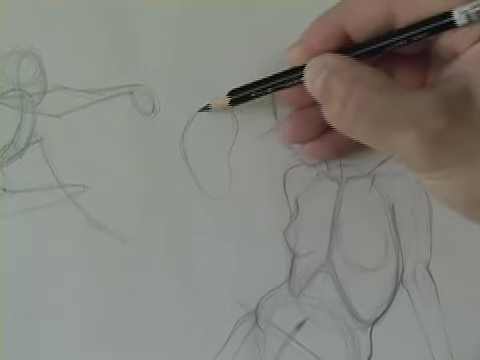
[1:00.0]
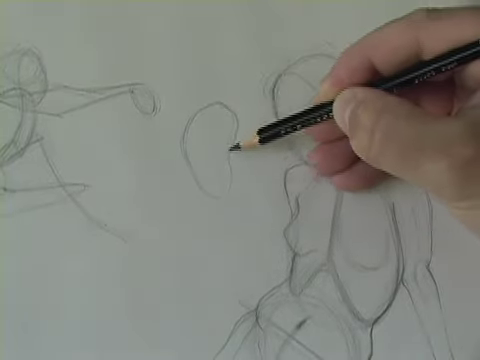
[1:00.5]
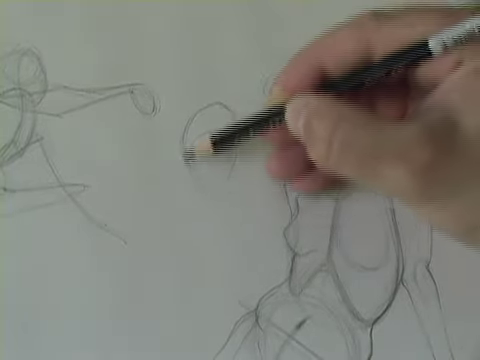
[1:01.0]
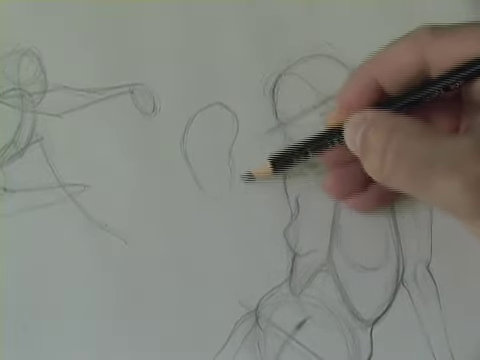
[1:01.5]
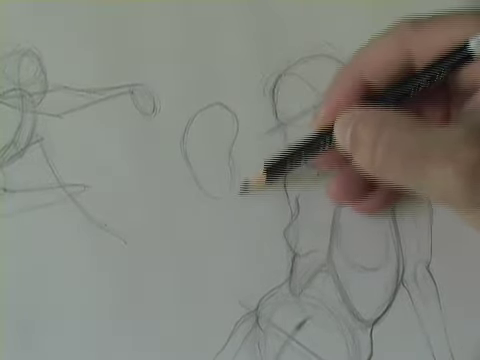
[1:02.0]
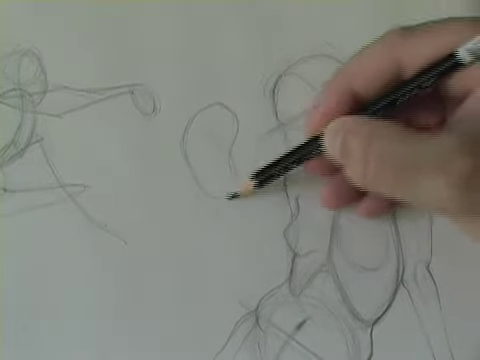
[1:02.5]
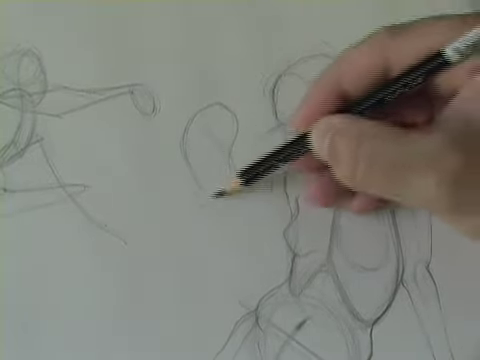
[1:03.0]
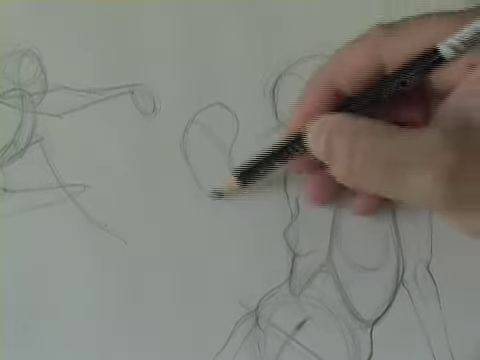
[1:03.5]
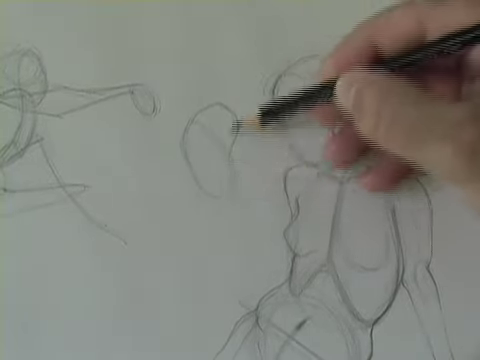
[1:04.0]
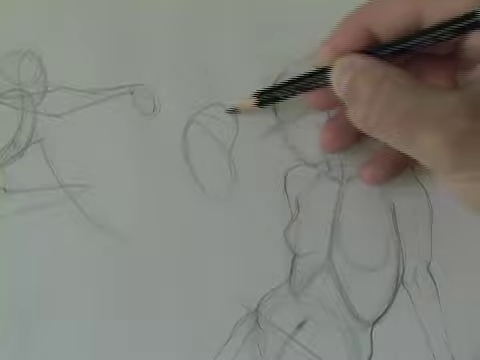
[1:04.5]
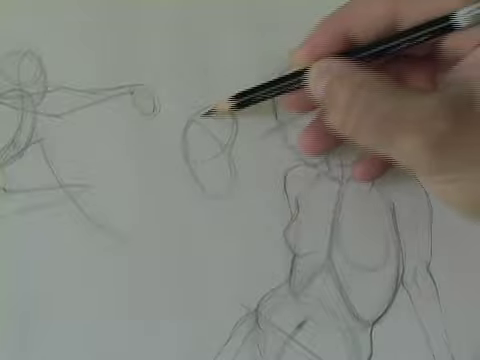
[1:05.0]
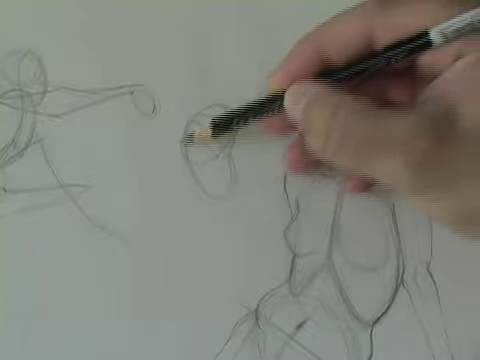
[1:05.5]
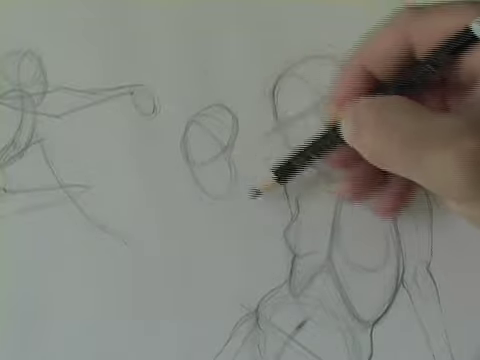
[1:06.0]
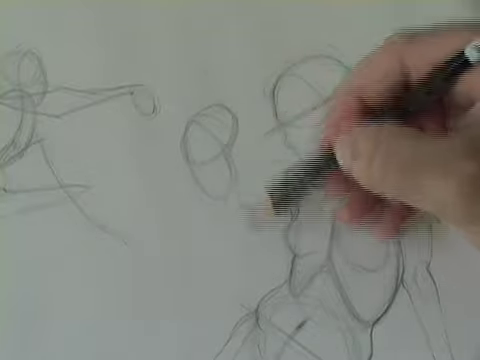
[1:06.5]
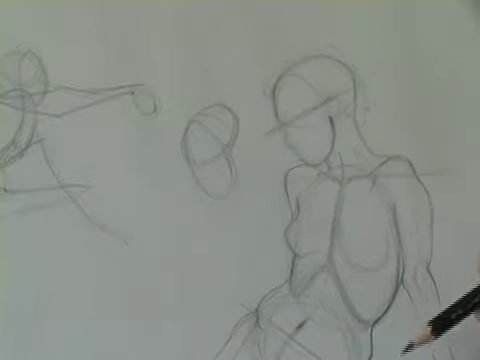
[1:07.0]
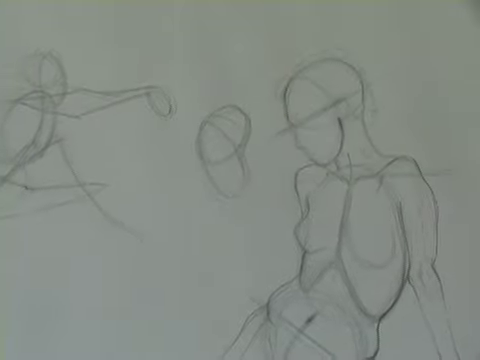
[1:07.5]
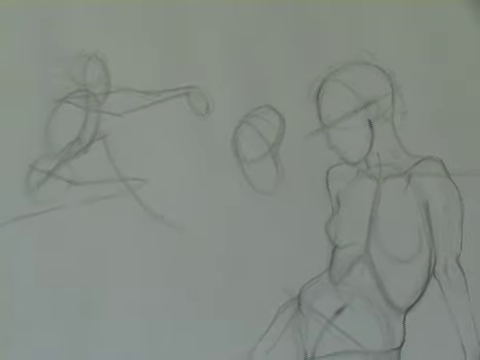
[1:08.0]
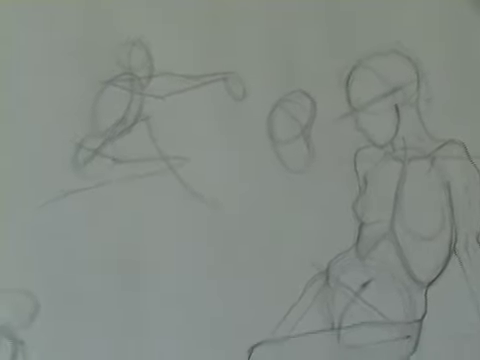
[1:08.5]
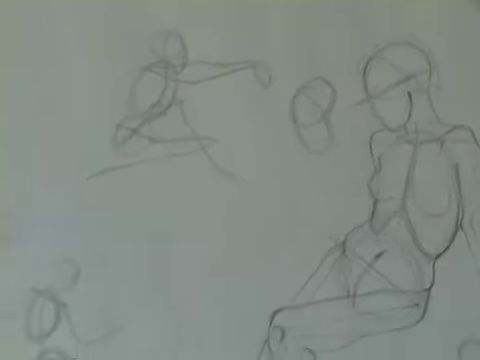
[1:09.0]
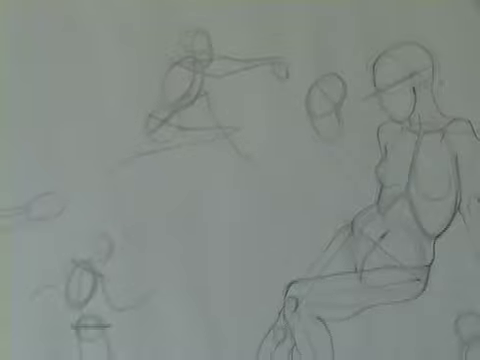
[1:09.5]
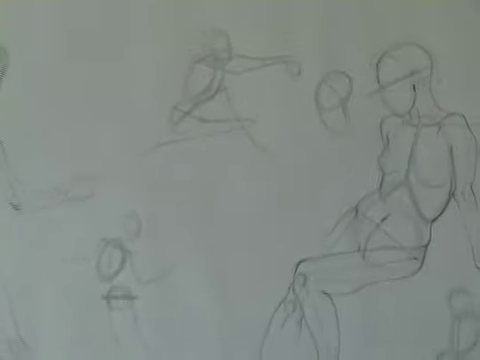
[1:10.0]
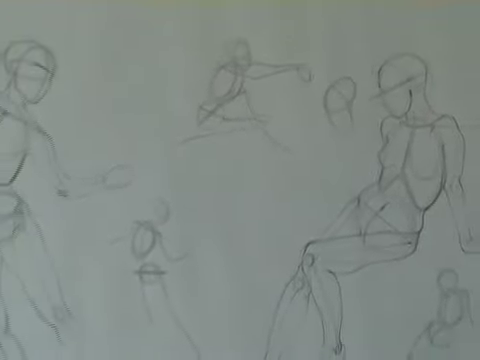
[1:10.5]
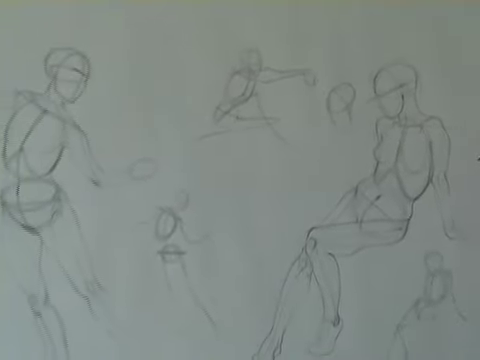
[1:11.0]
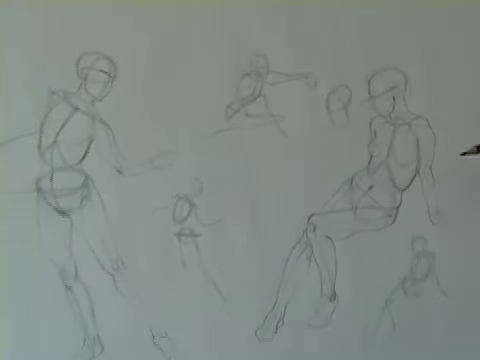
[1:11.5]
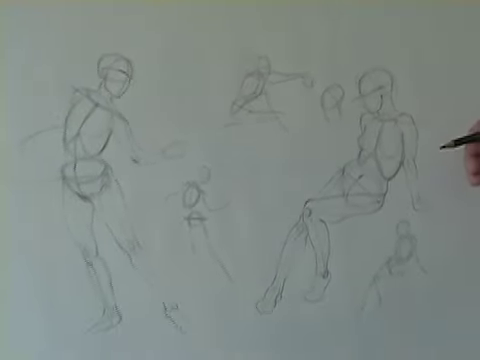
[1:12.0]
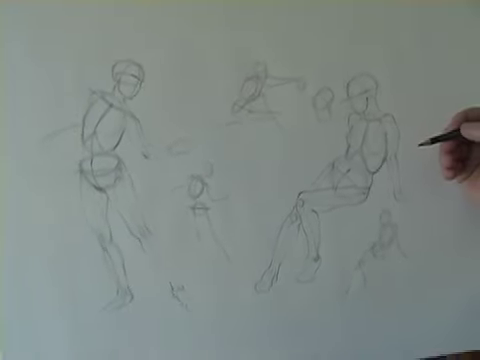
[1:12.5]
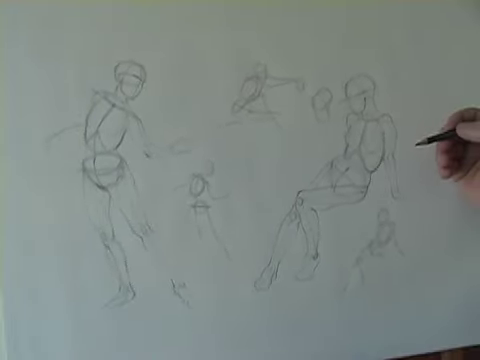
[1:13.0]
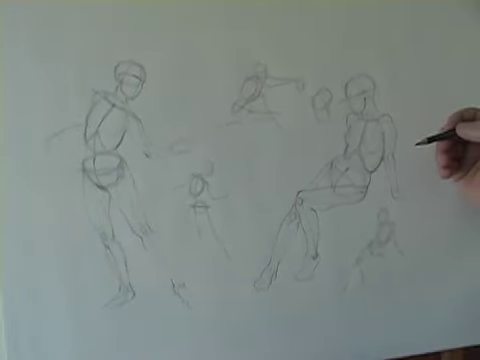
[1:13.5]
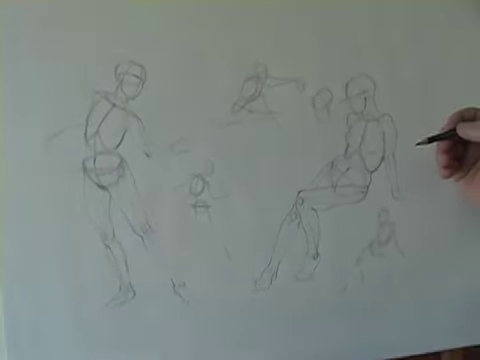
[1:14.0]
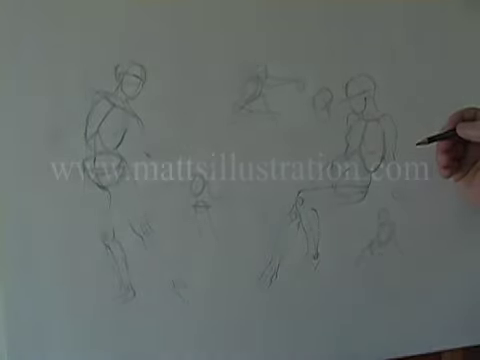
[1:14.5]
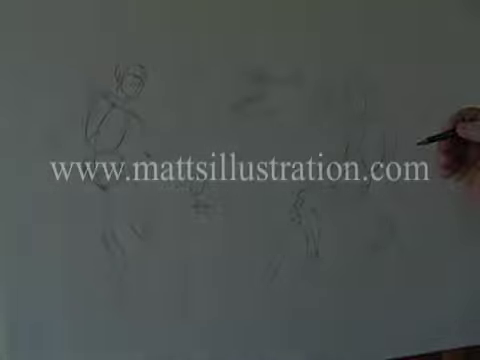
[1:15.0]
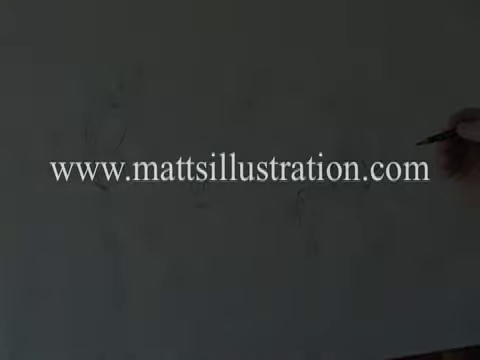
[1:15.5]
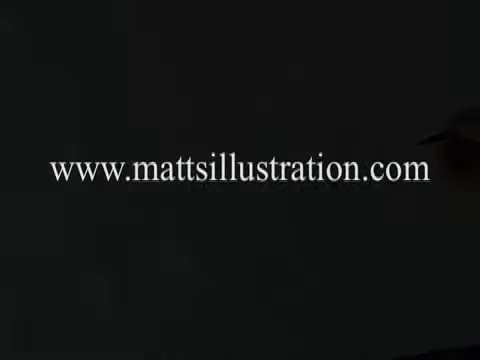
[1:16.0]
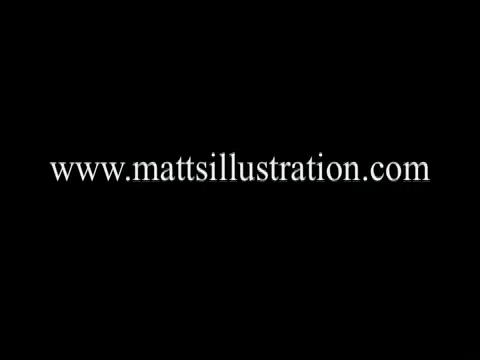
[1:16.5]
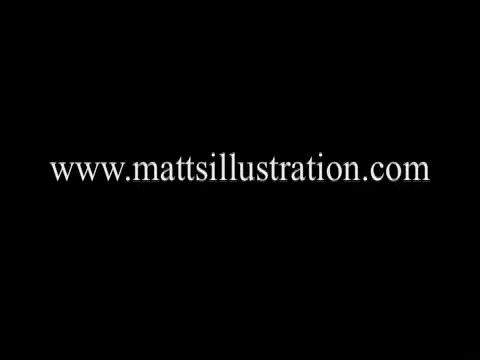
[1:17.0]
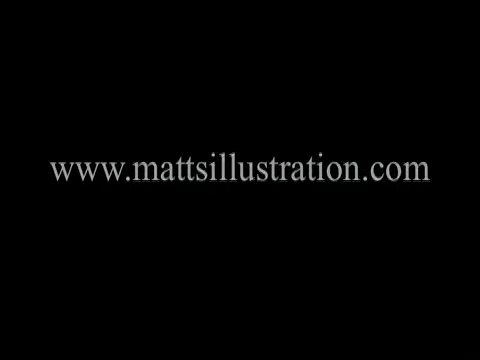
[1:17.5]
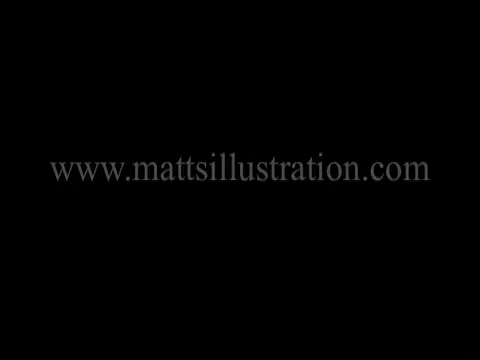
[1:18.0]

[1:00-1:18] The artist continues designing how the face should be shaped. On the left of the original humanoid design, the part where the head should be is drawn, along with the hair and the area where the face should be. On the left of the bigger design is another design whose legs are still a bit like sticks, not fully designed yet. The face's shape matches the example exactly, and the figures are all sitting in a comfortable position. The camera then zooms out further to show two other figures on the left part, one bigger and one smaller, in the same pose. The bigger one is almost complete, at least as a rough design: the torso and legs are well designed, the knees are visible, and the hands make an almost dancing move. Its head is on the left side, looking a bit freer and more relaxed. The one in the middle is in a somewhat sitting, relaxed pose, sitting on the floor.